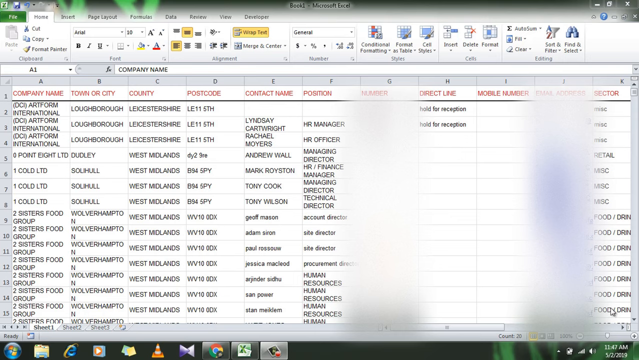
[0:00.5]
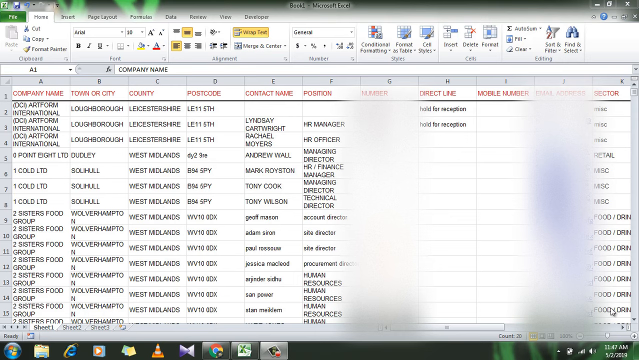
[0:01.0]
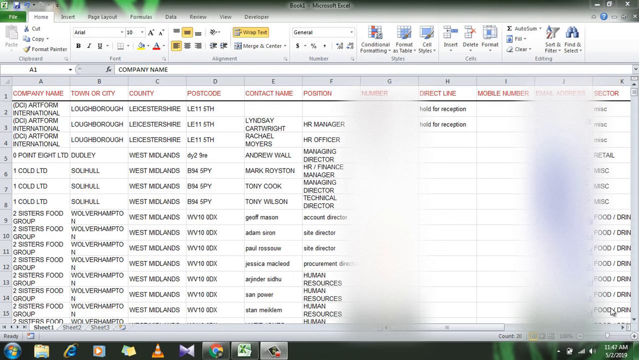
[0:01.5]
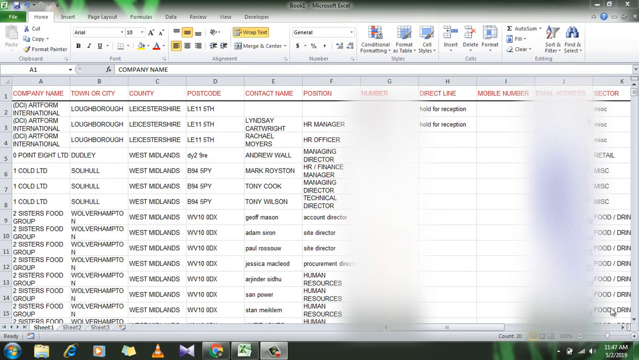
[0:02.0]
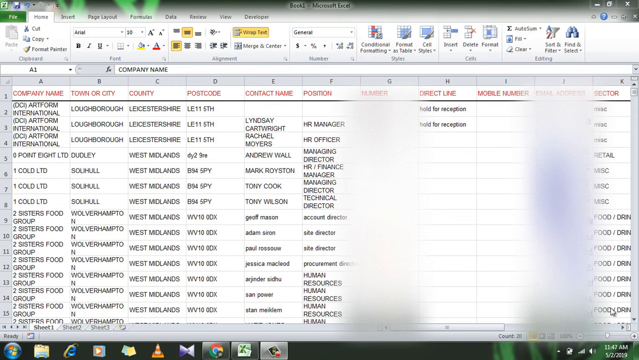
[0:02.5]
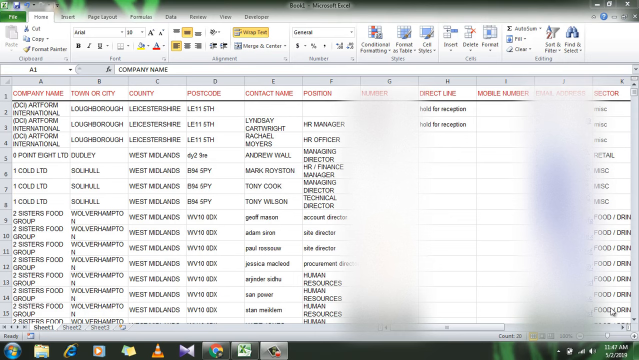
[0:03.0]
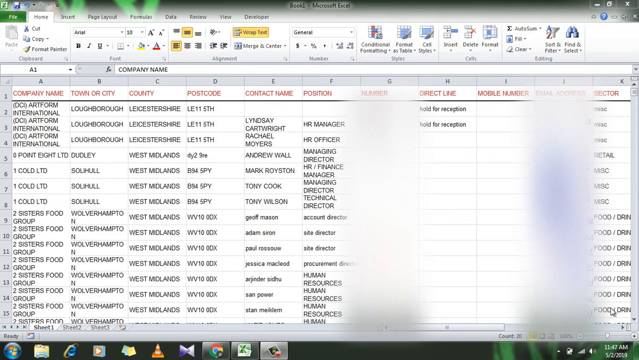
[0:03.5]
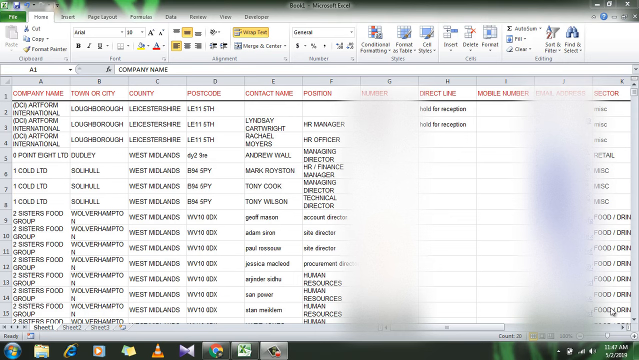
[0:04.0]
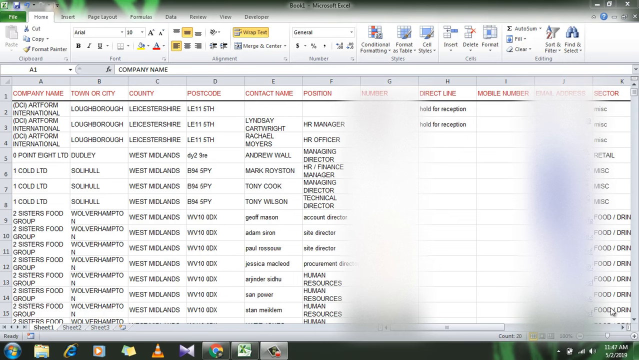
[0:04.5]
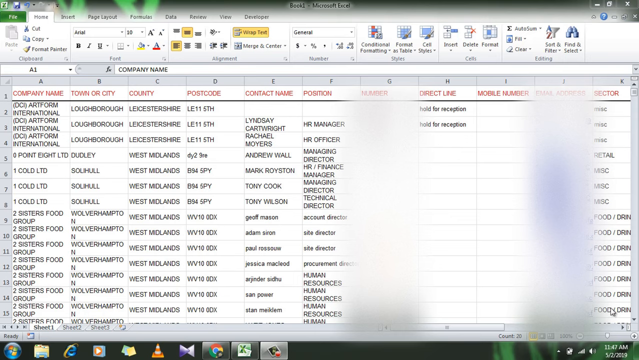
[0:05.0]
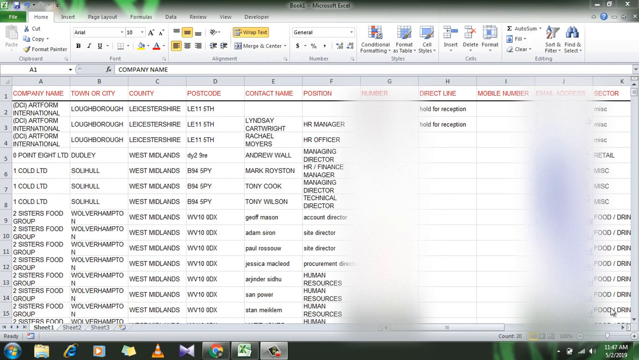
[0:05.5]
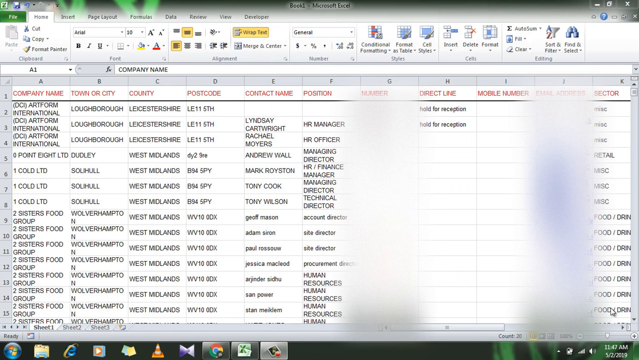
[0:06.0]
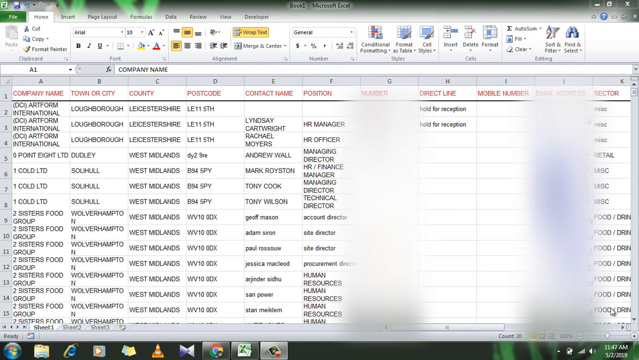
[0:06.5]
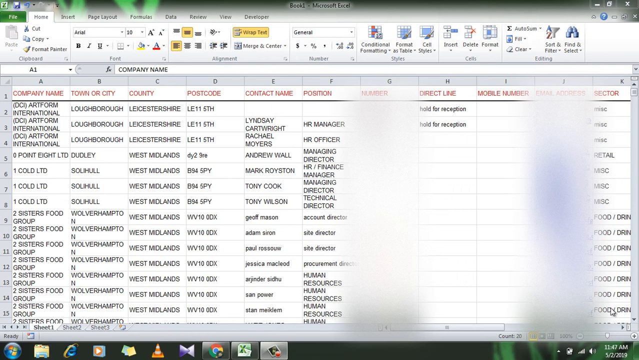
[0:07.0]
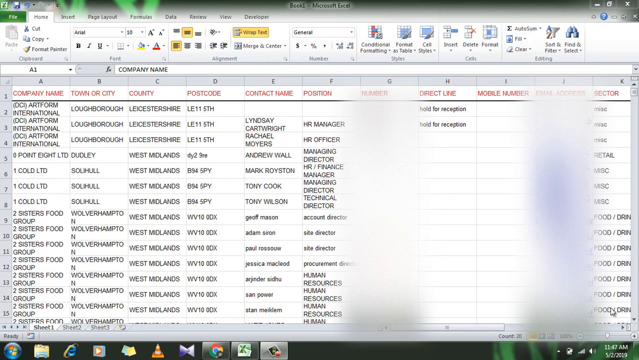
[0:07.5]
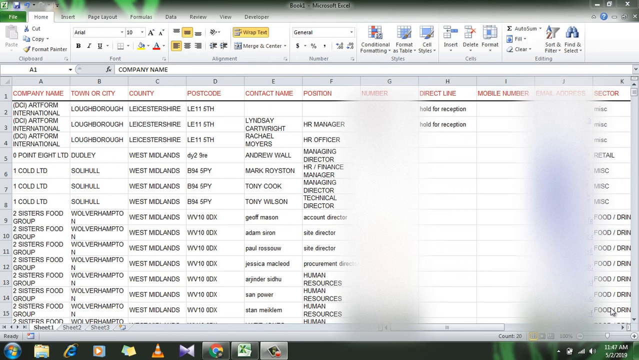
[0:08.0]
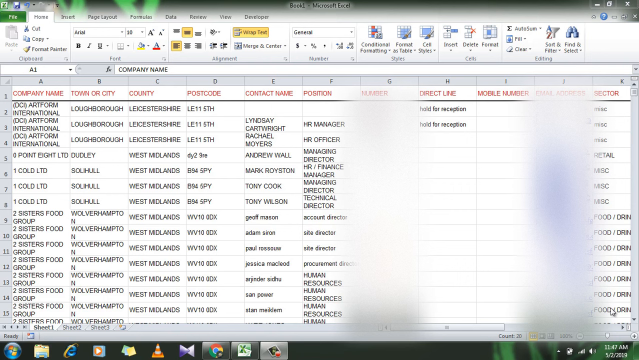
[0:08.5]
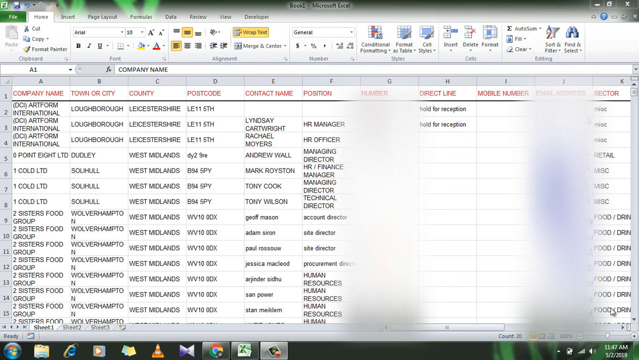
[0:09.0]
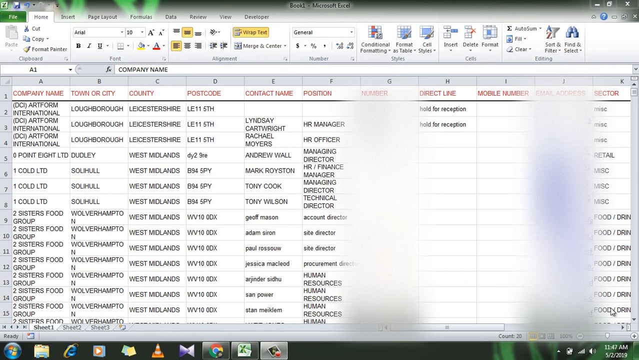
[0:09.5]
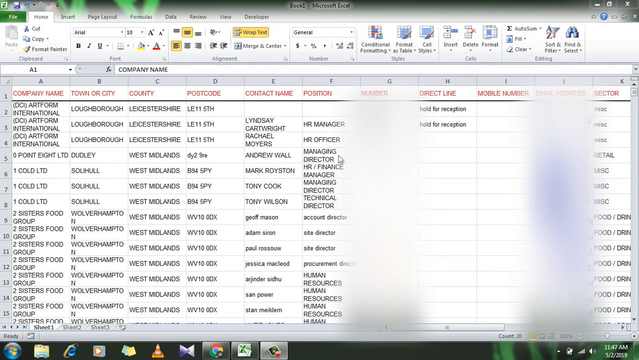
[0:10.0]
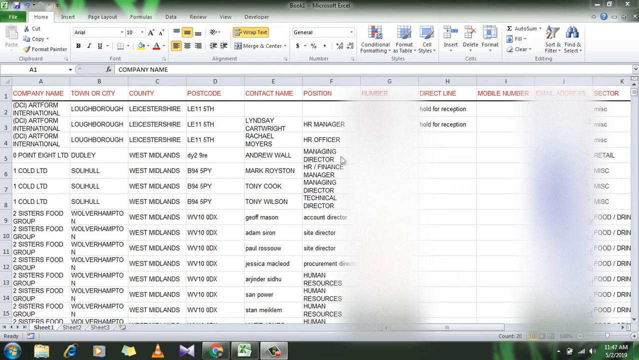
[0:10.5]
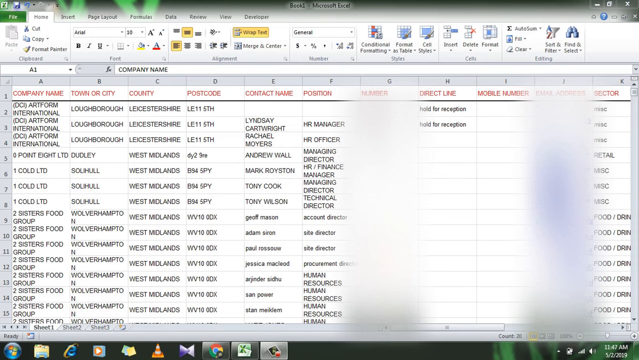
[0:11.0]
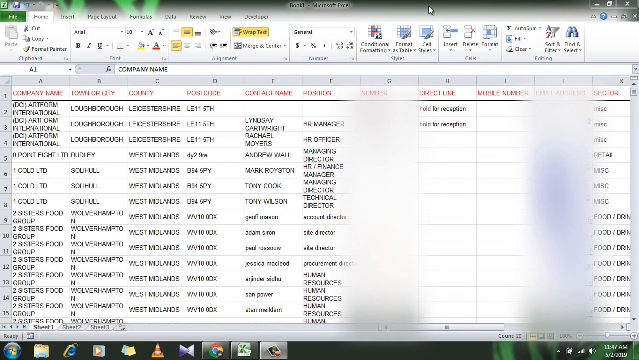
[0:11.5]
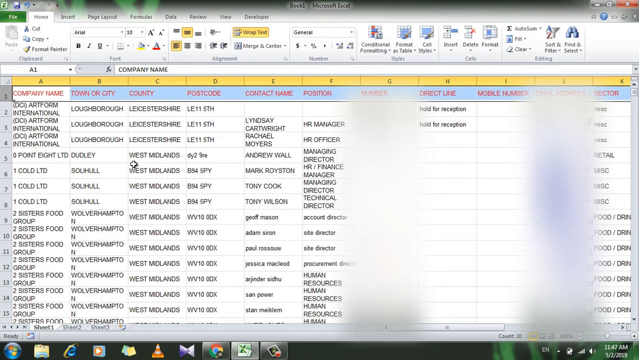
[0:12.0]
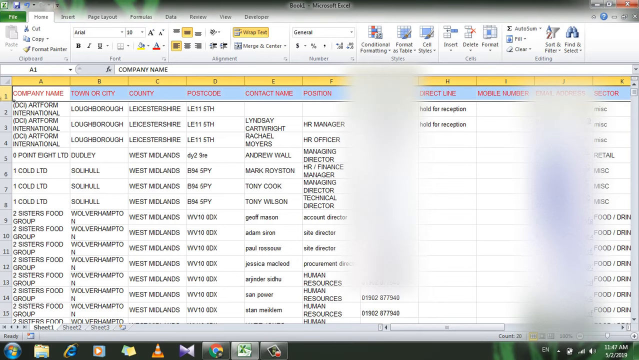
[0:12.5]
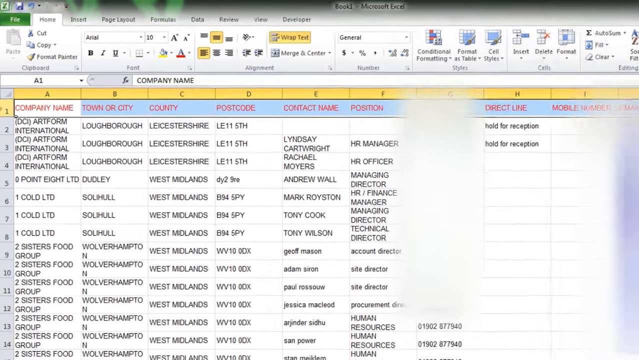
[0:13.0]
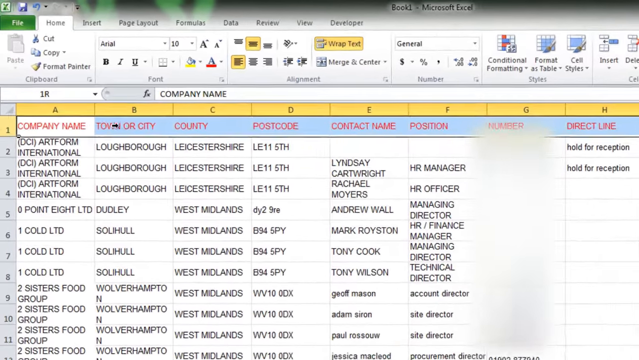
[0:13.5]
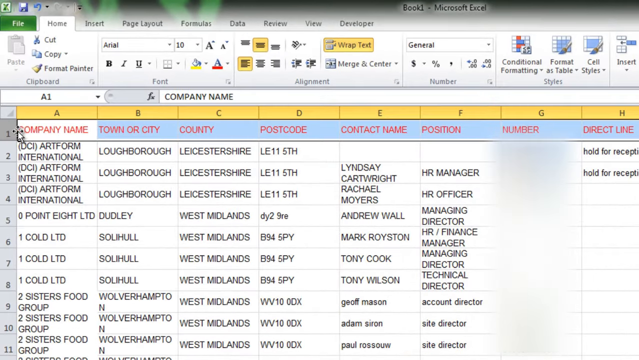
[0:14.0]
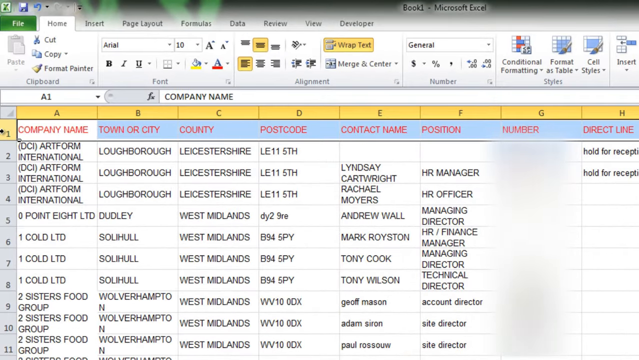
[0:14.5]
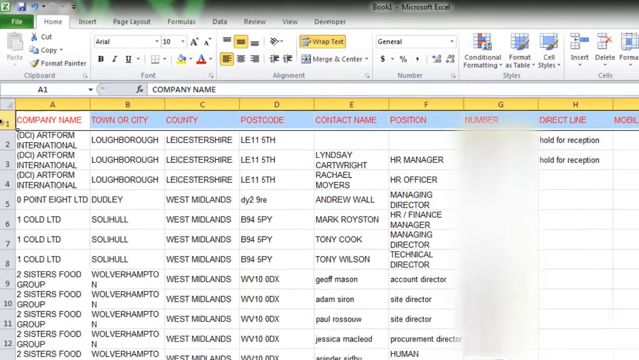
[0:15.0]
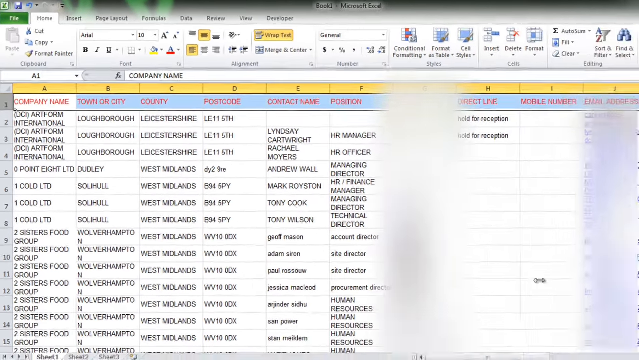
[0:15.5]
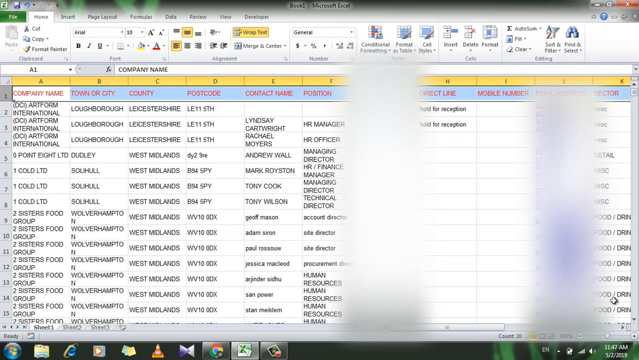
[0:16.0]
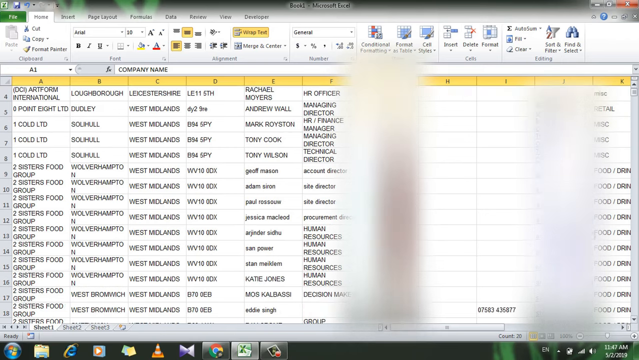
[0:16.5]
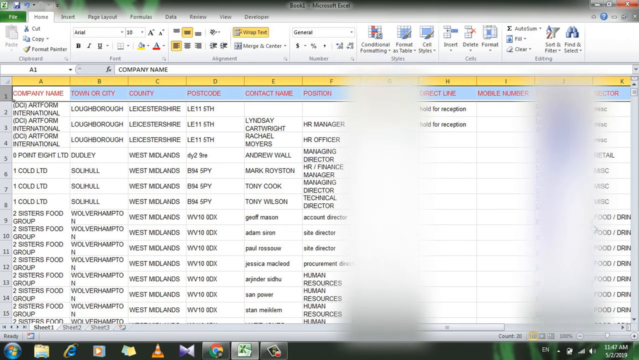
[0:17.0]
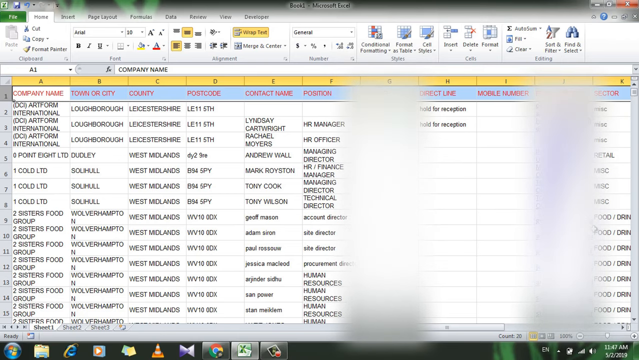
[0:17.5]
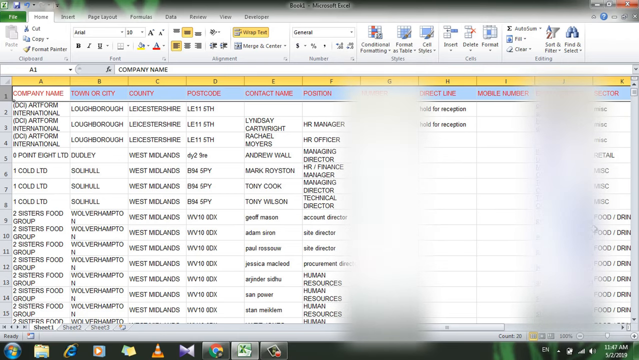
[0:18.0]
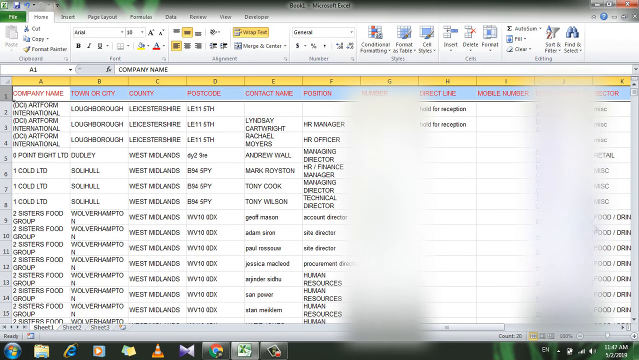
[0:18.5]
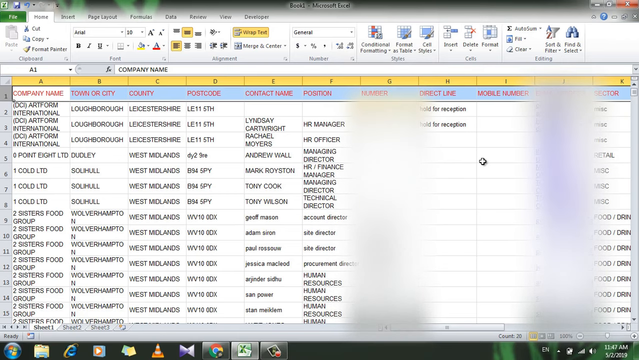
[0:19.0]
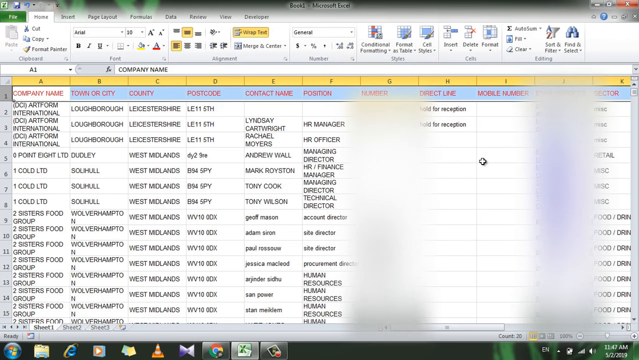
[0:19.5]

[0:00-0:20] Microsoft Excel is open, showing a spreadsheet with column headings including company name, town or city, county, postcode, contact name, number, direct line, mobile number, email address and sector. The sheet holds details of employees and companies.